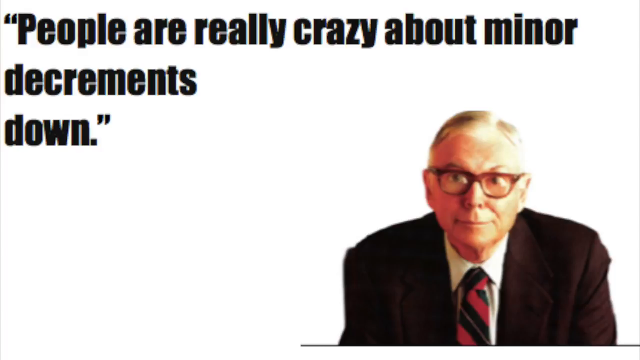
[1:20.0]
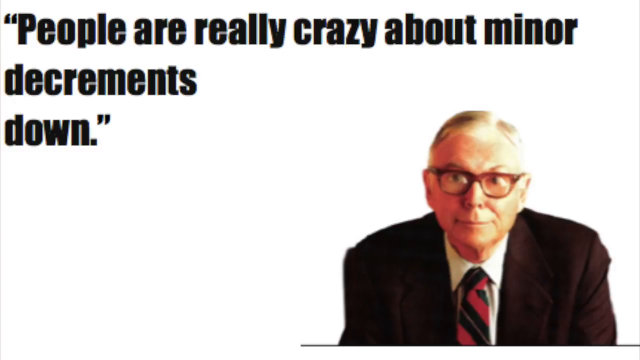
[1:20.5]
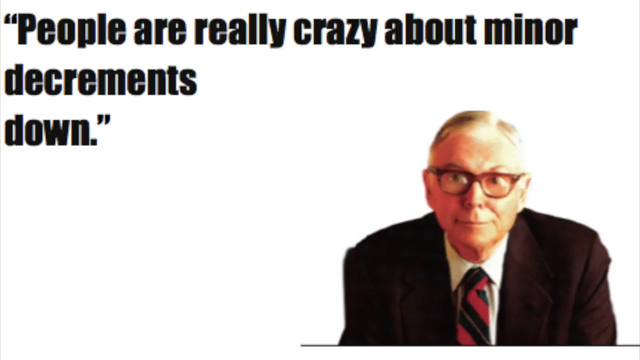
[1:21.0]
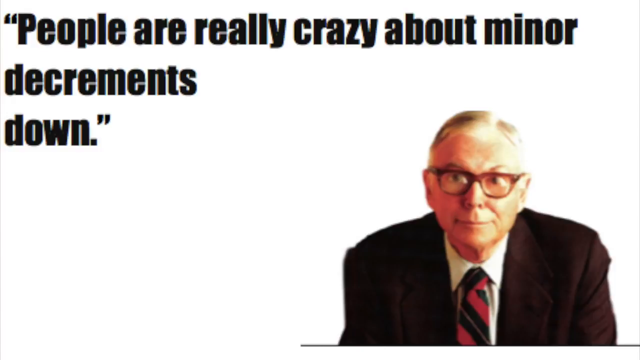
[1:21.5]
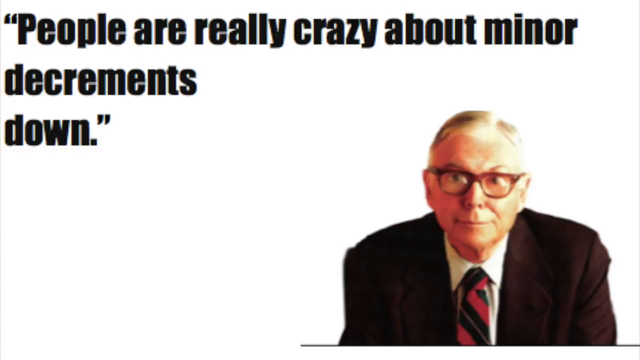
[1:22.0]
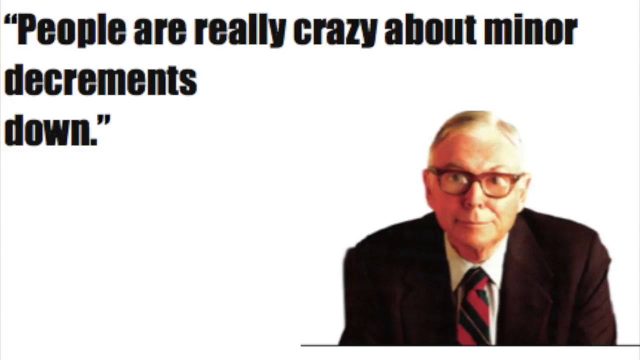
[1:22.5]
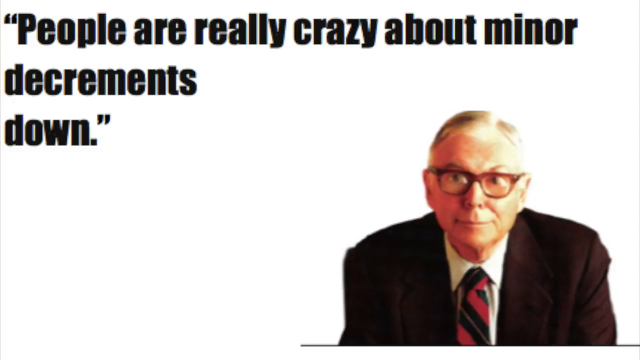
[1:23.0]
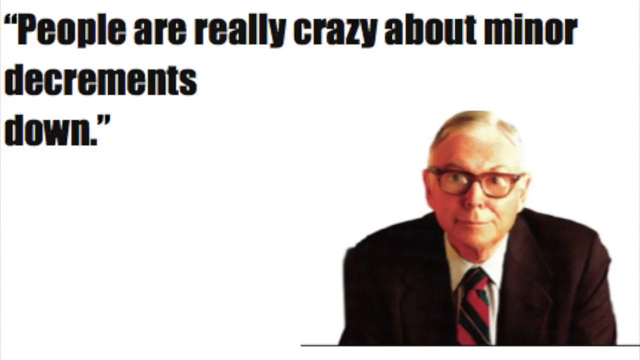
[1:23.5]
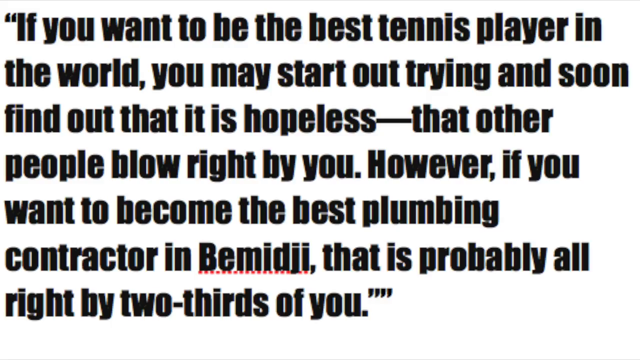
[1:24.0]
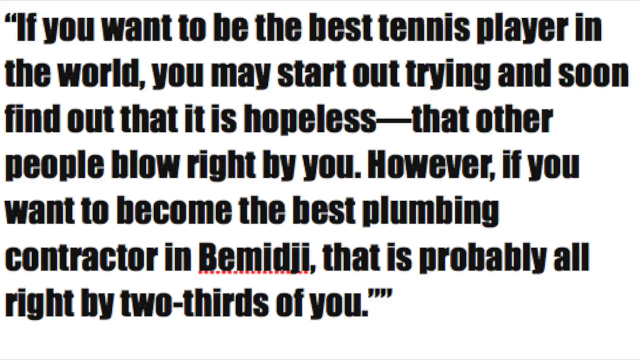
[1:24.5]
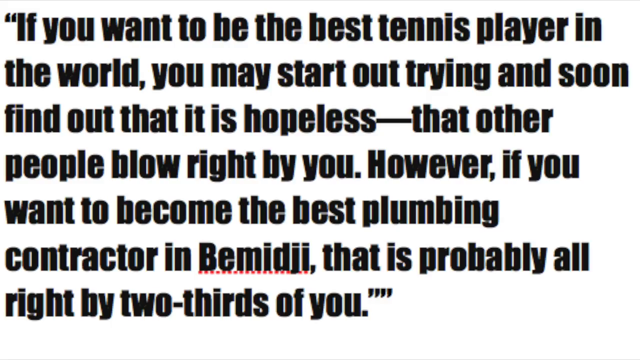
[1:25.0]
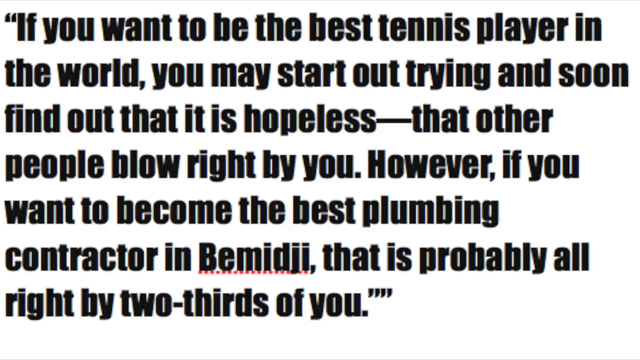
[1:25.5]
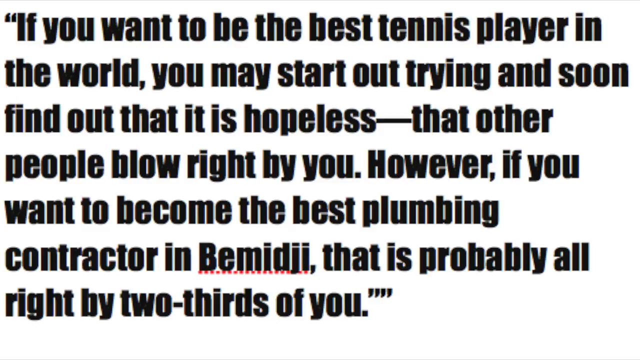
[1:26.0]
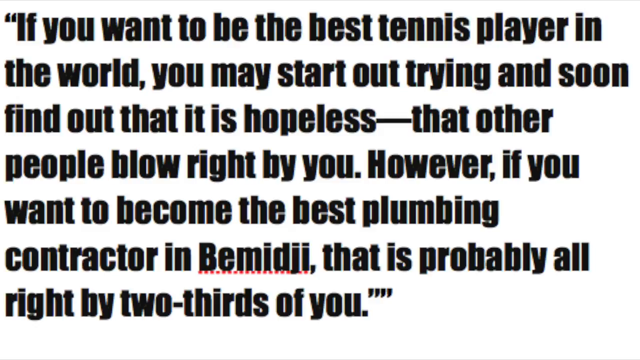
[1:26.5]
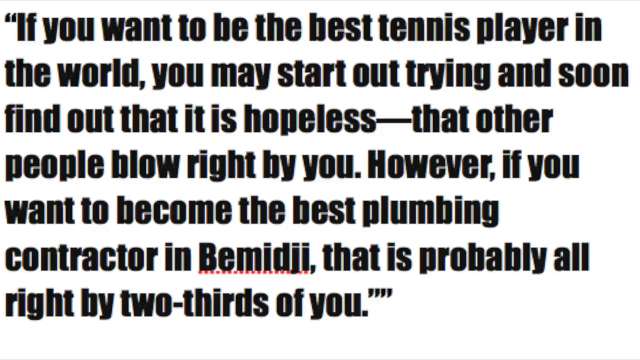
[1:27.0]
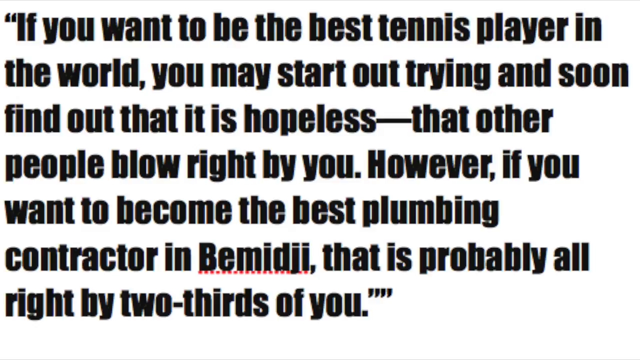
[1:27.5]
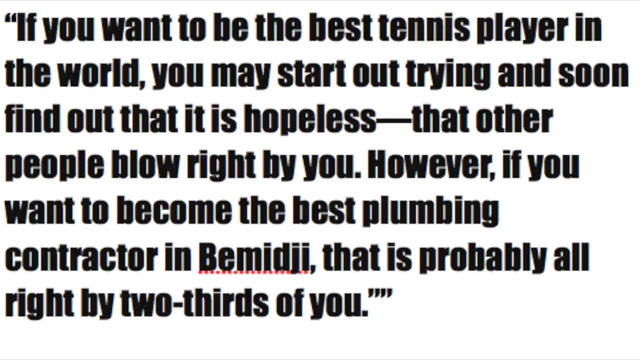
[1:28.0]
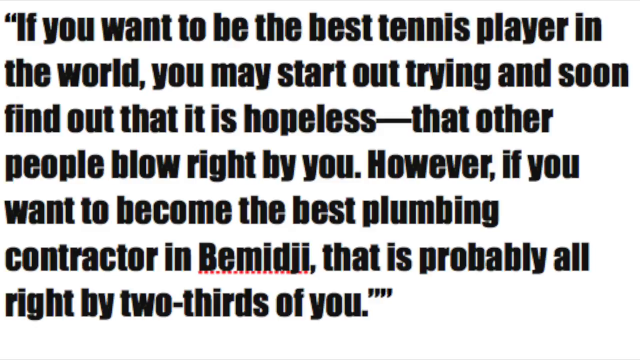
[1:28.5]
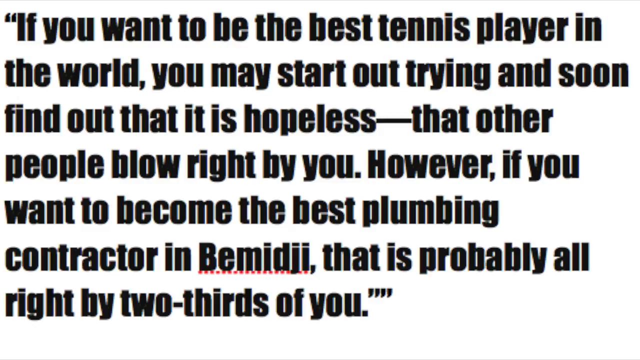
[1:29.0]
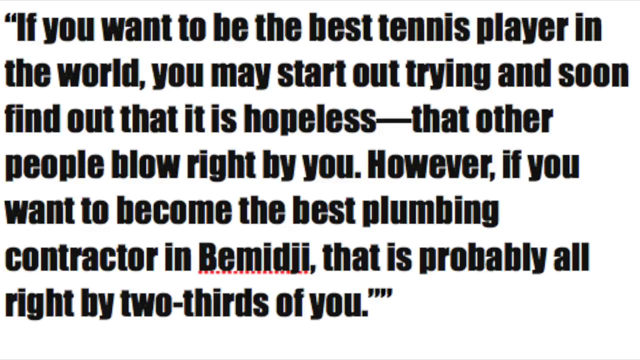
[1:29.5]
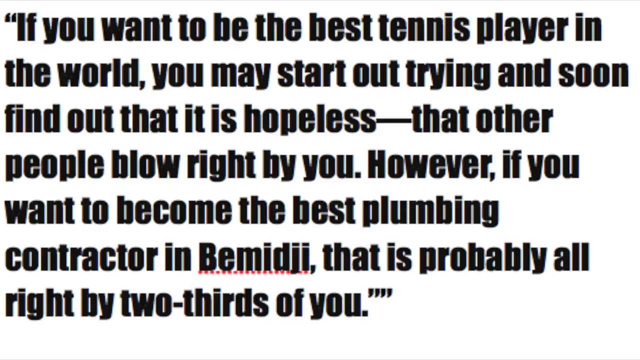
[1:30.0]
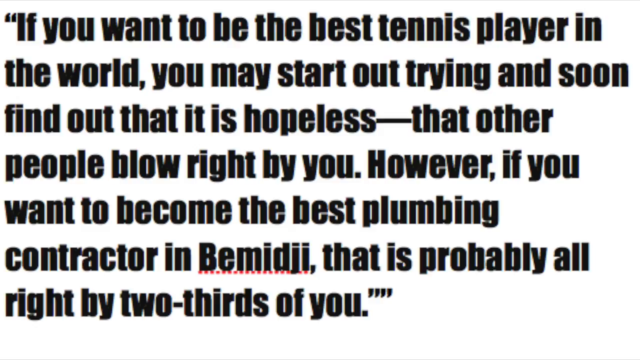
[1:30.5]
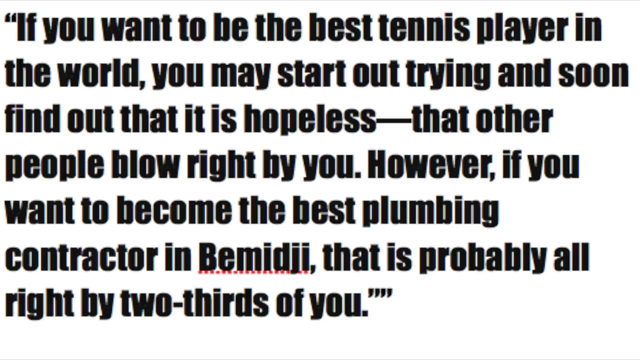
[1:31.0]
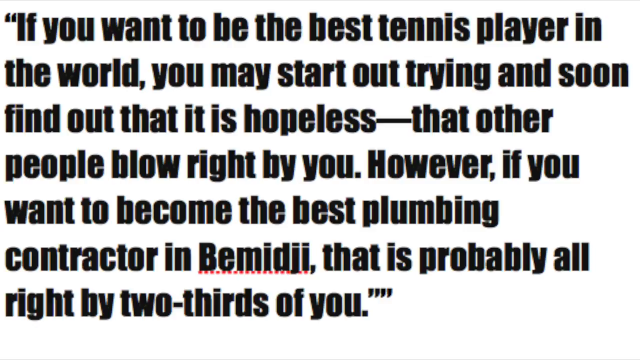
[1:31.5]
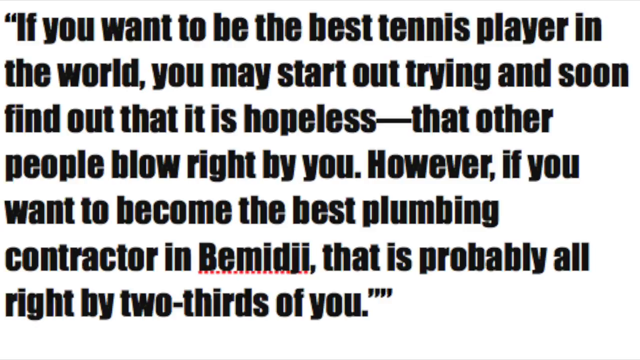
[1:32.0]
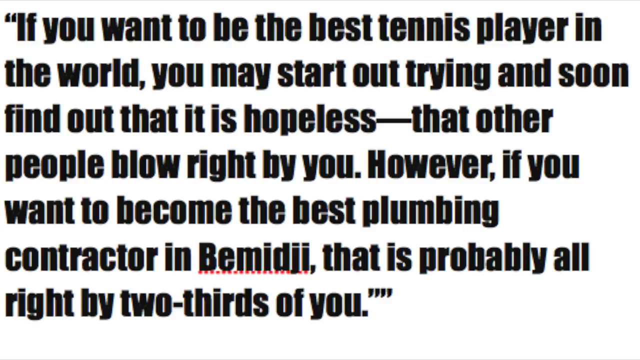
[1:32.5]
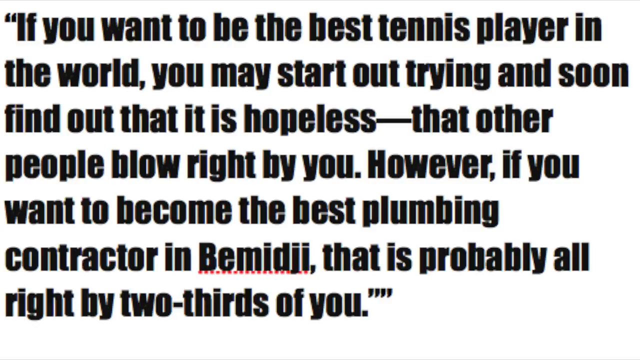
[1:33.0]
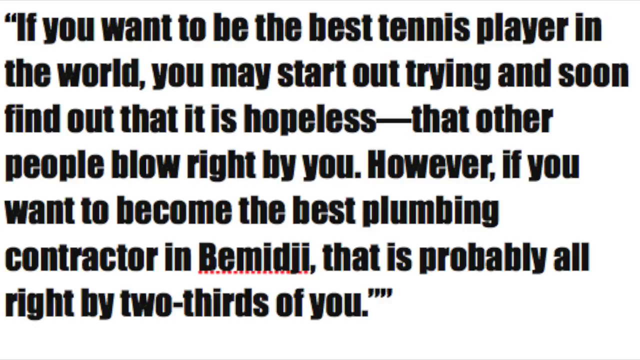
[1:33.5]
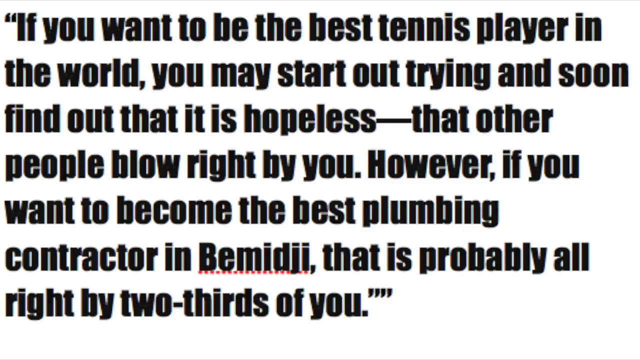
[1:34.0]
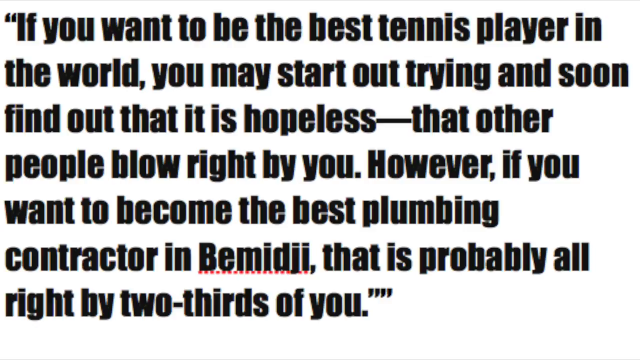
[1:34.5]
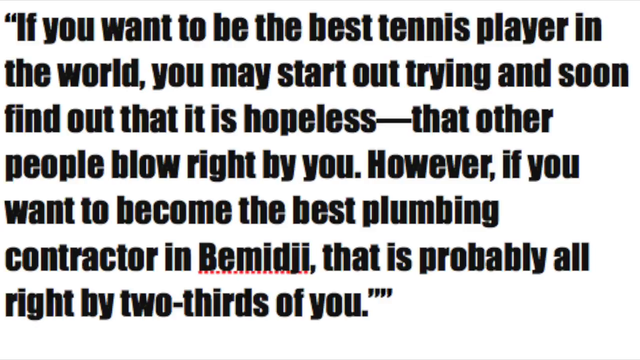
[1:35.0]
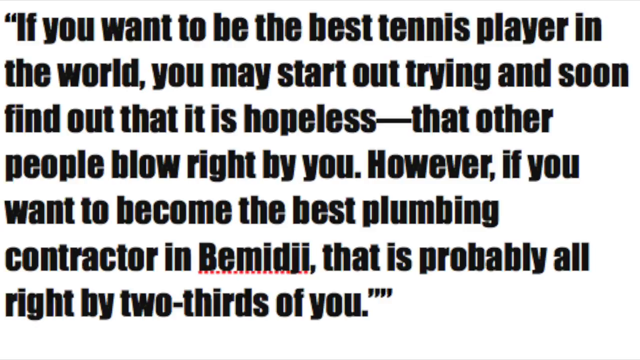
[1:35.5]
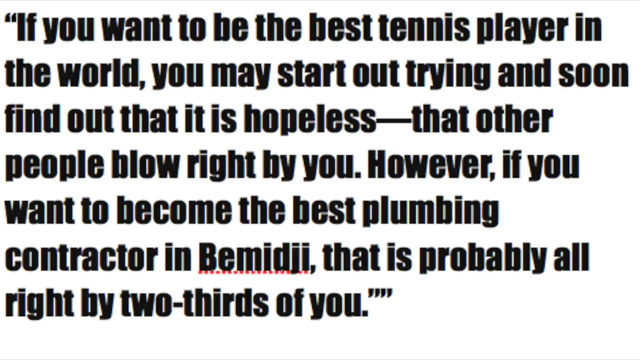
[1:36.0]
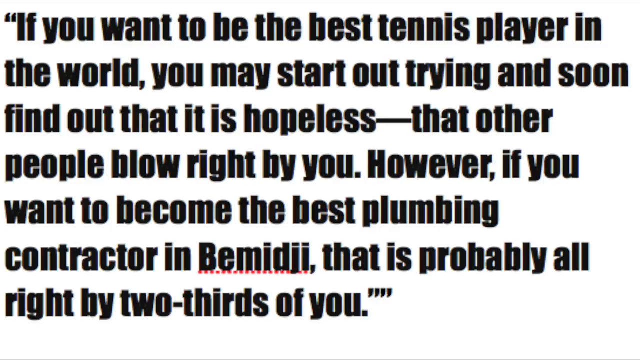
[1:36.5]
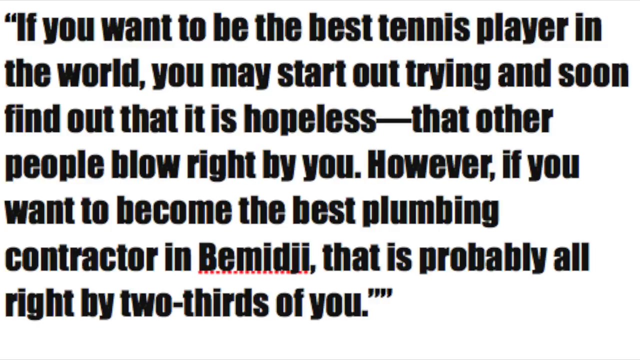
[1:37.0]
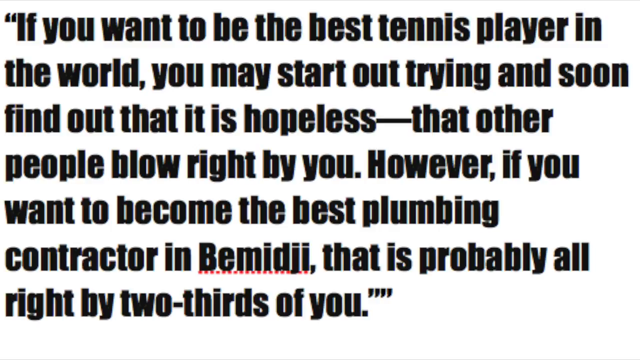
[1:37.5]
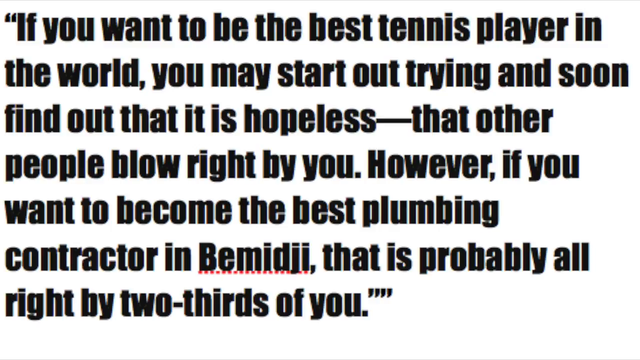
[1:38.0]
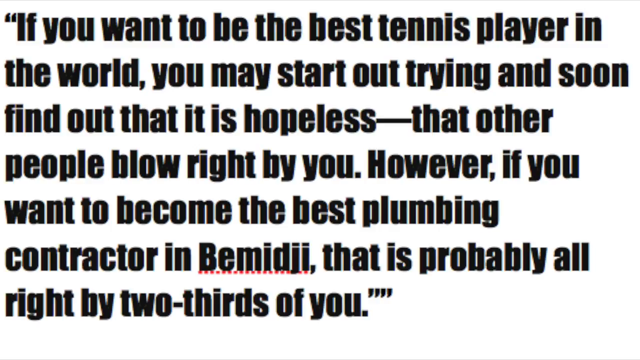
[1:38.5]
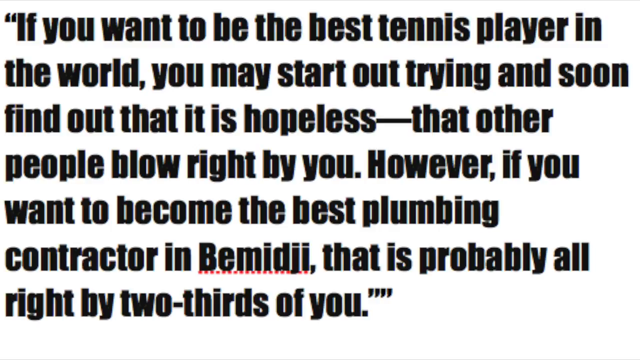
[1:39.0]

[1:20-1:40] Most of the screen is white apart from a fairly large portrait on the right side. It shows a man sitting and looking at the viewer with a very condescending look on his face. He has mostly gray hair parted to the right and wears plastic-framed glasses with a reddish tint, a reddish brown suit, a white shirt and a red and black tie. Across the top of the screen is a quote beginning "people are really crazy about." It stays on the screen, and then another message appears: "if you want to be the best tennis player in the world, you may start out trying, and soon find out that it is hopeless, that other people blow right by you. However, if you want to become the best plumbing contractor in Bemidji, that is probably all right by two-thirds of you." This message stays on the screen for a while.